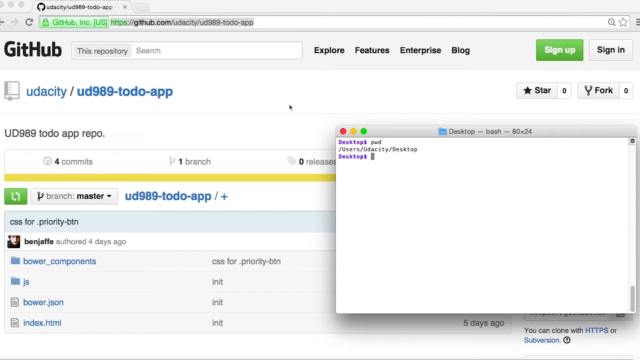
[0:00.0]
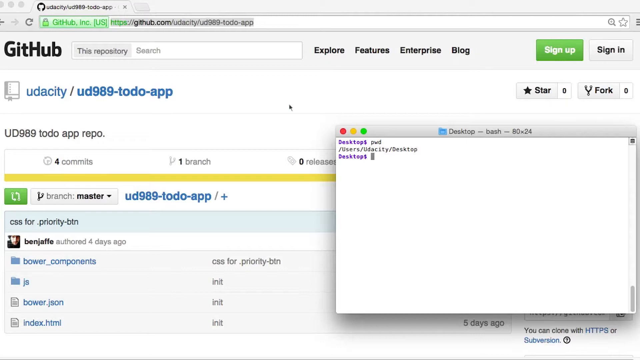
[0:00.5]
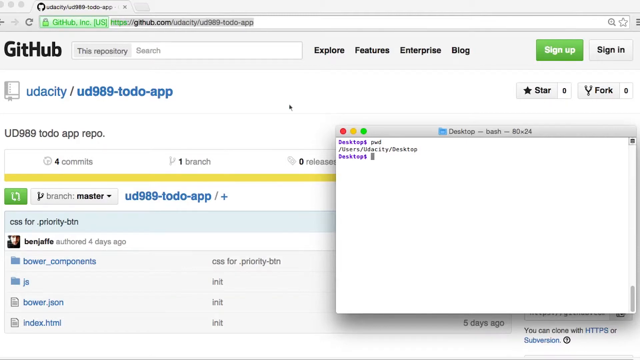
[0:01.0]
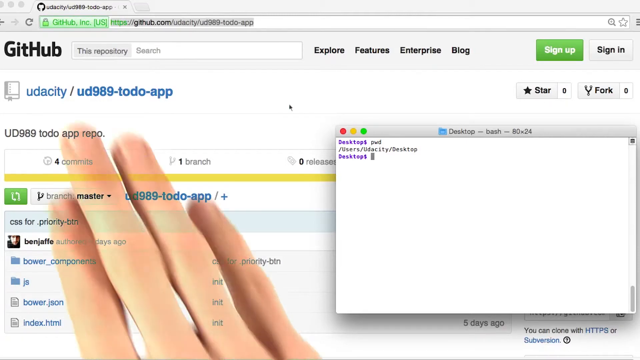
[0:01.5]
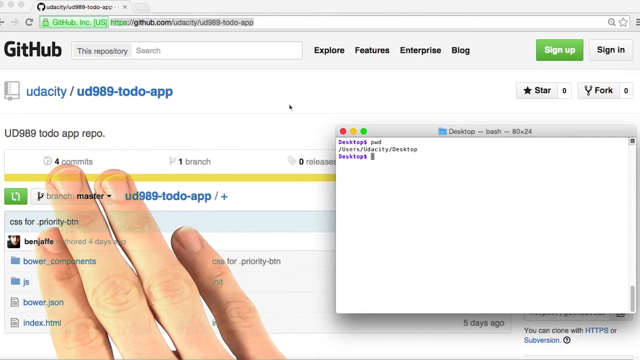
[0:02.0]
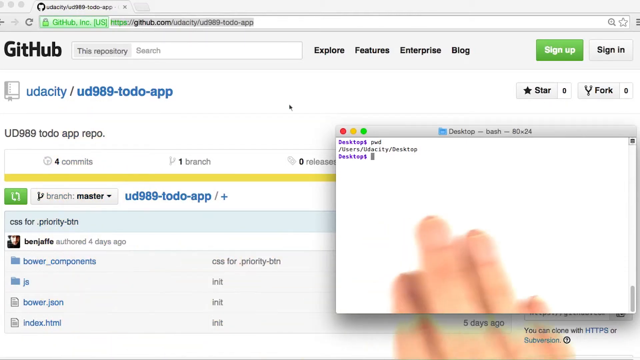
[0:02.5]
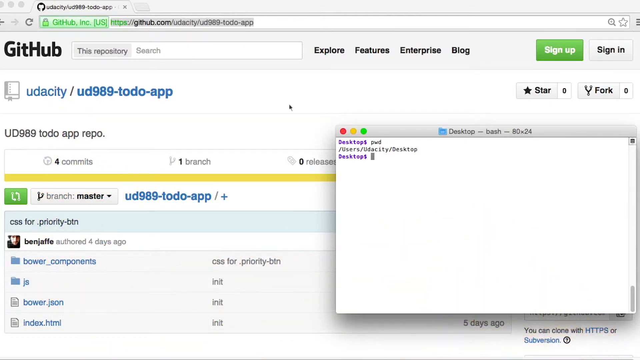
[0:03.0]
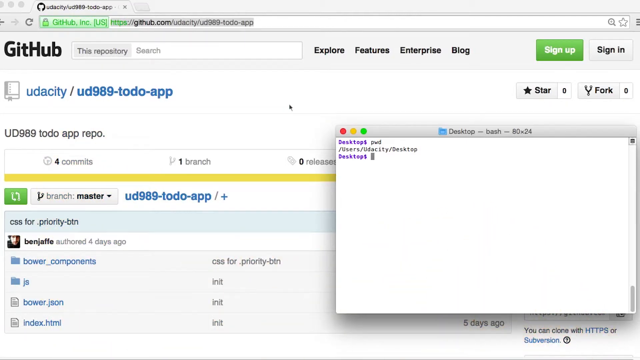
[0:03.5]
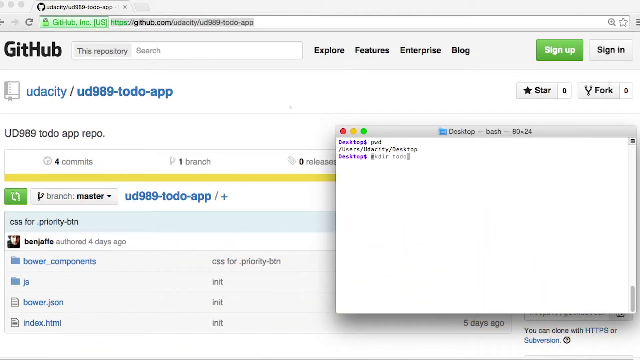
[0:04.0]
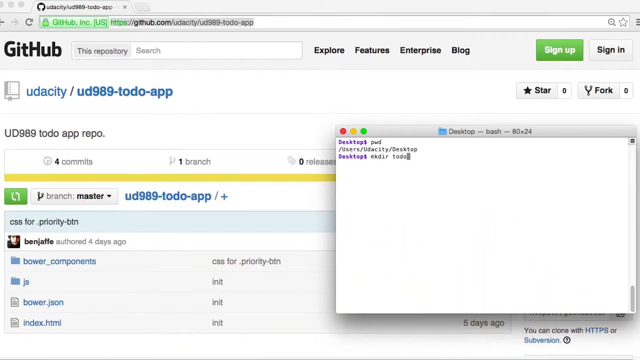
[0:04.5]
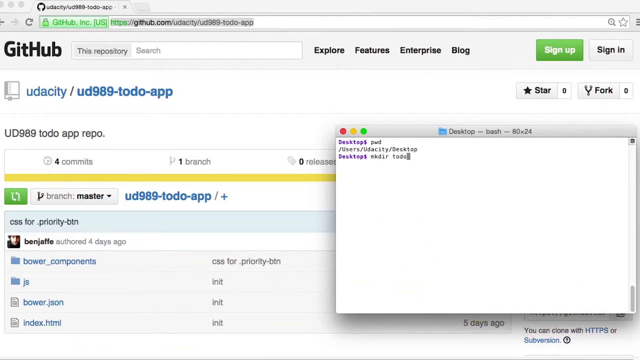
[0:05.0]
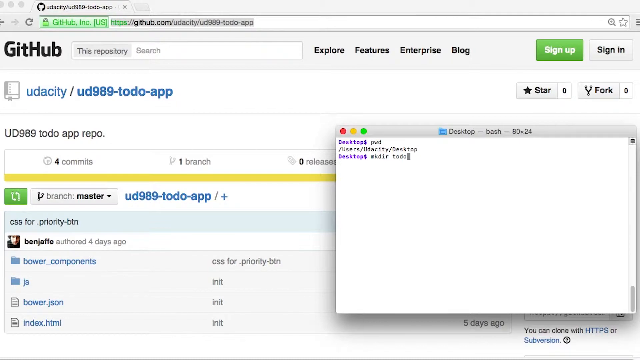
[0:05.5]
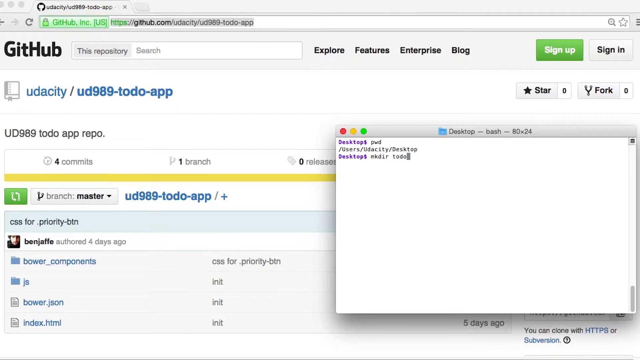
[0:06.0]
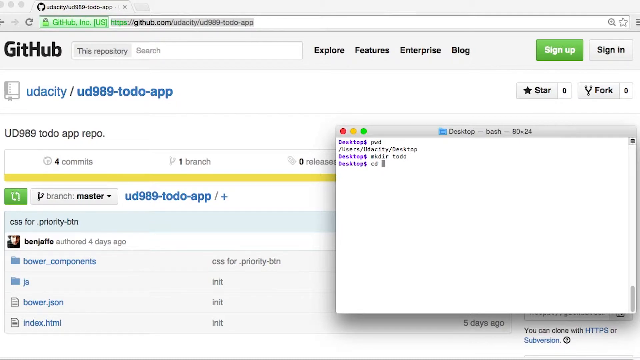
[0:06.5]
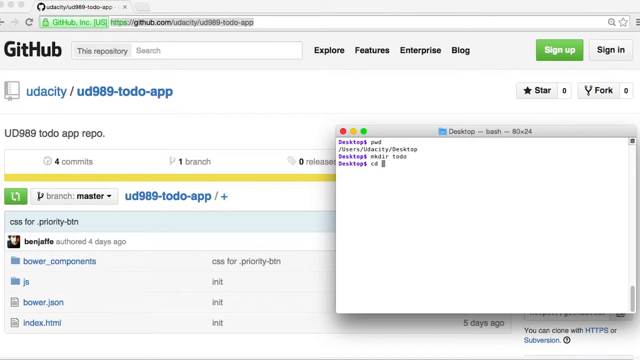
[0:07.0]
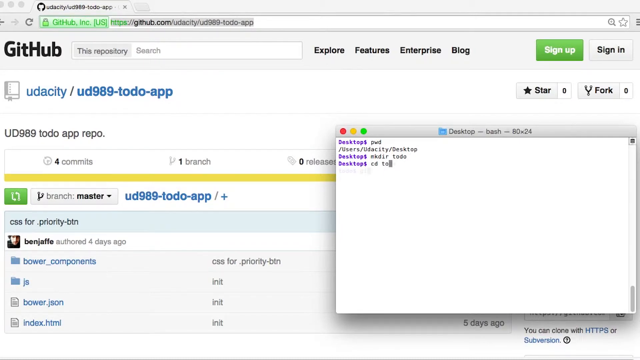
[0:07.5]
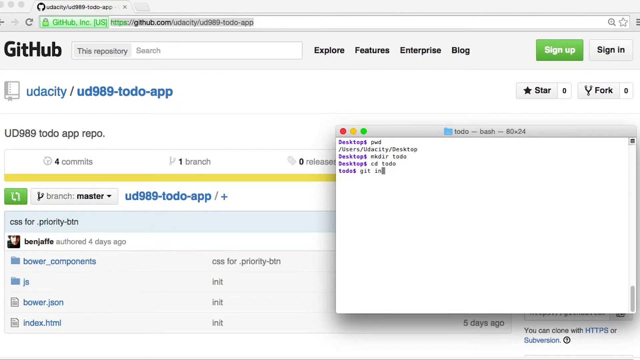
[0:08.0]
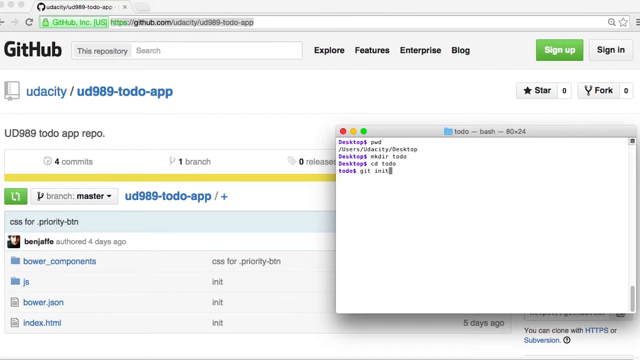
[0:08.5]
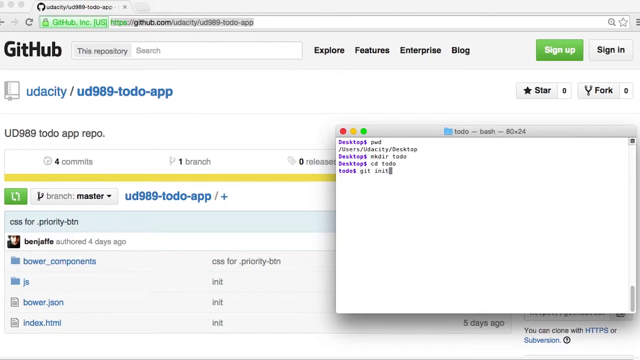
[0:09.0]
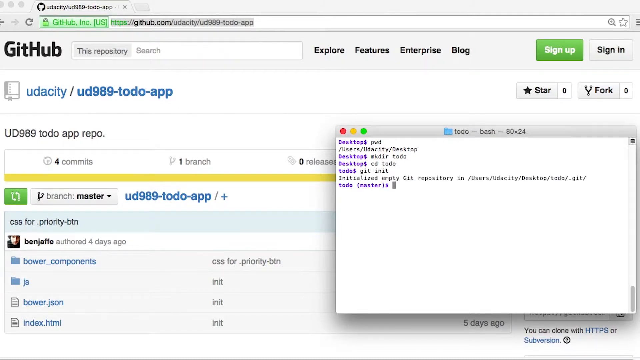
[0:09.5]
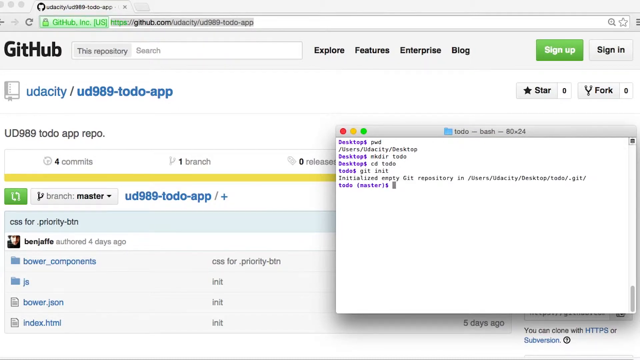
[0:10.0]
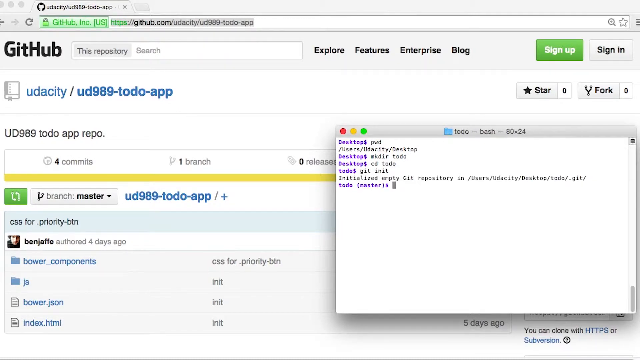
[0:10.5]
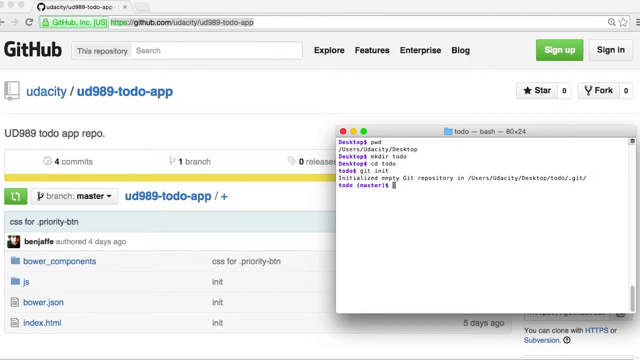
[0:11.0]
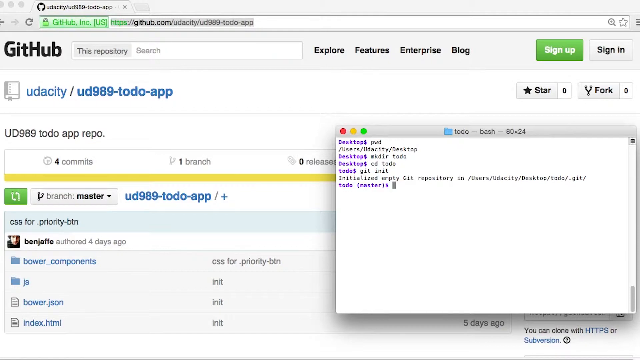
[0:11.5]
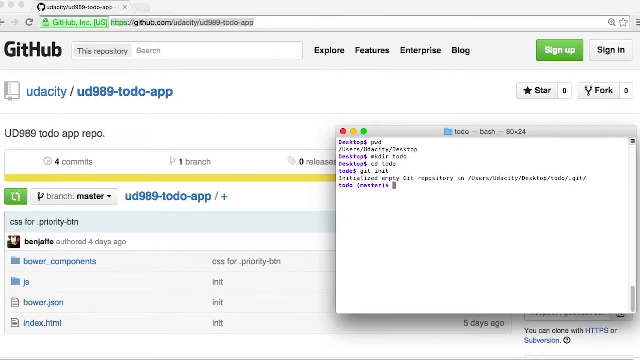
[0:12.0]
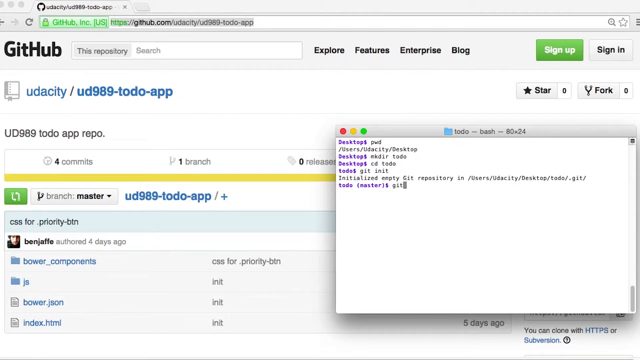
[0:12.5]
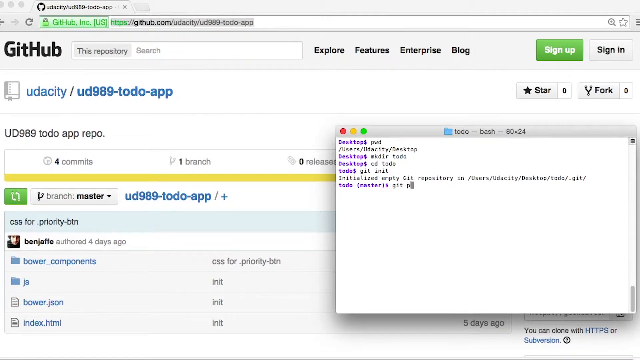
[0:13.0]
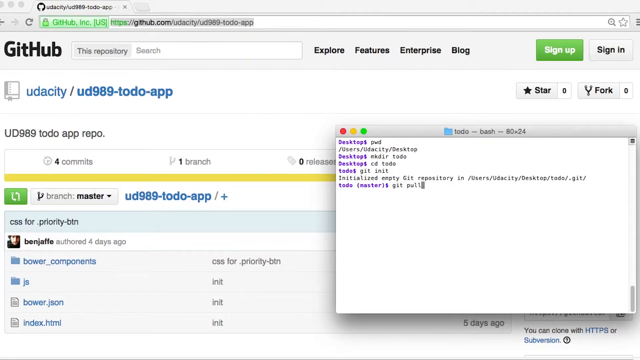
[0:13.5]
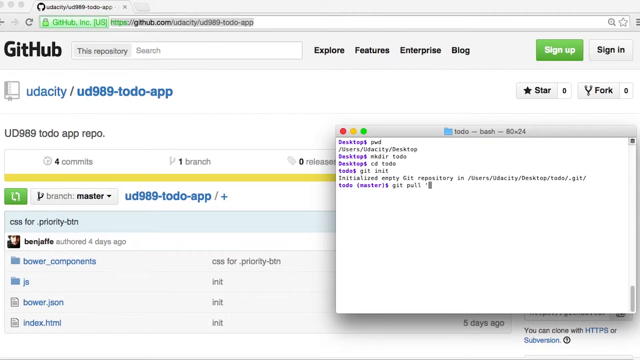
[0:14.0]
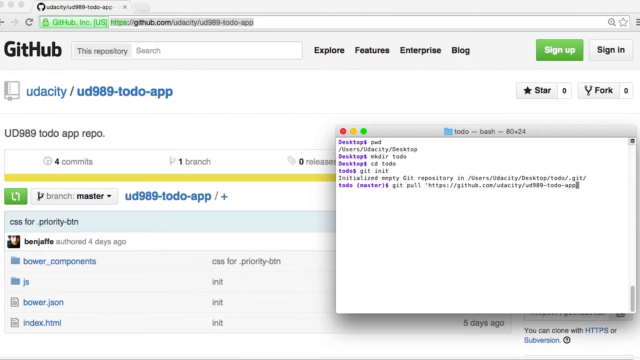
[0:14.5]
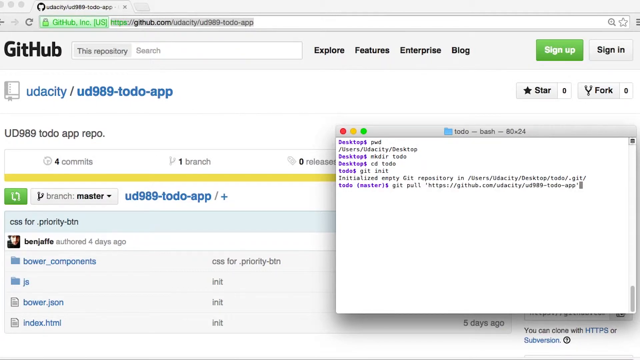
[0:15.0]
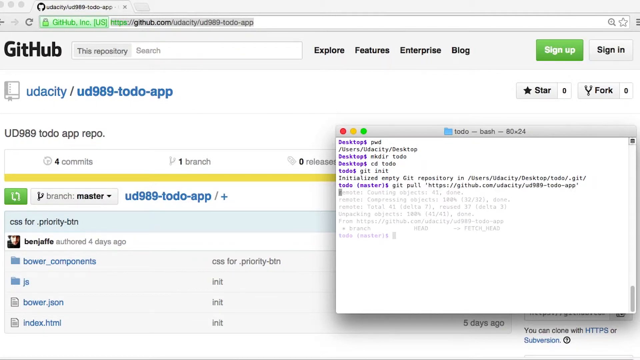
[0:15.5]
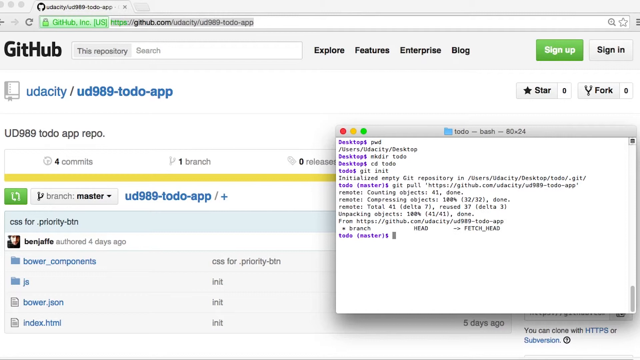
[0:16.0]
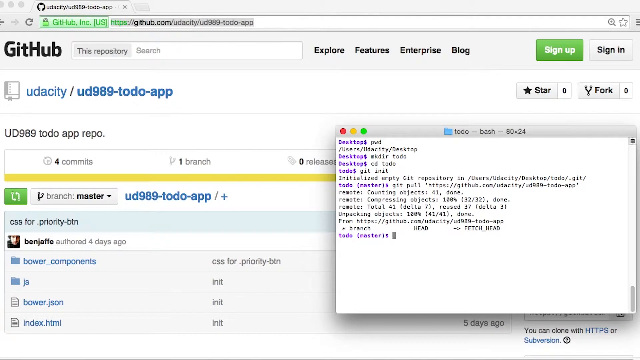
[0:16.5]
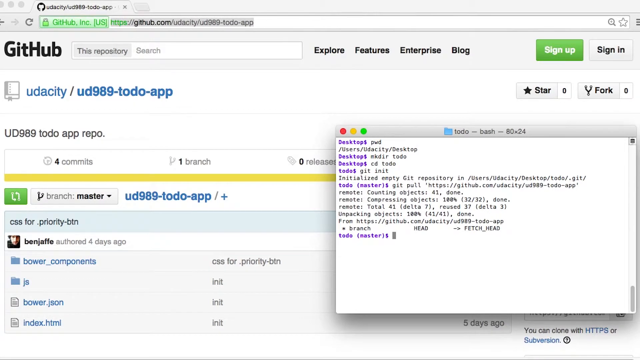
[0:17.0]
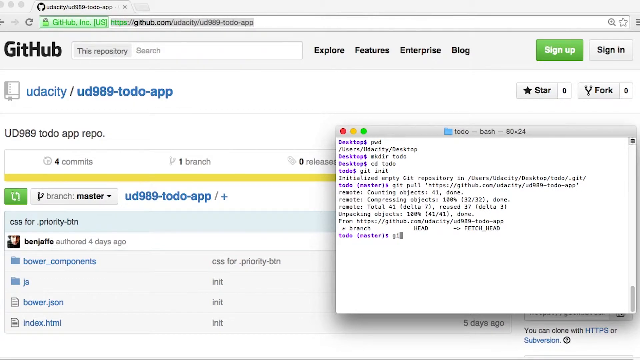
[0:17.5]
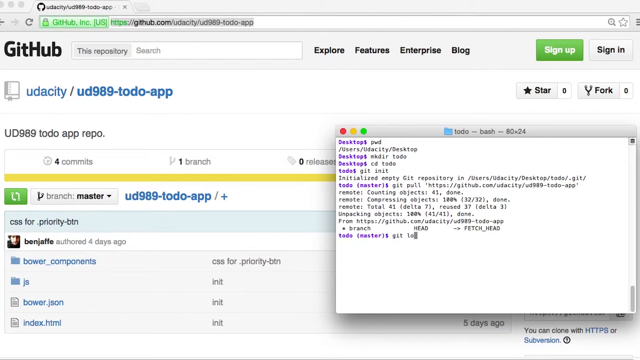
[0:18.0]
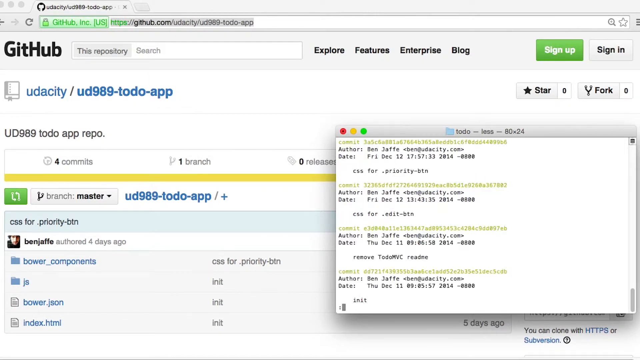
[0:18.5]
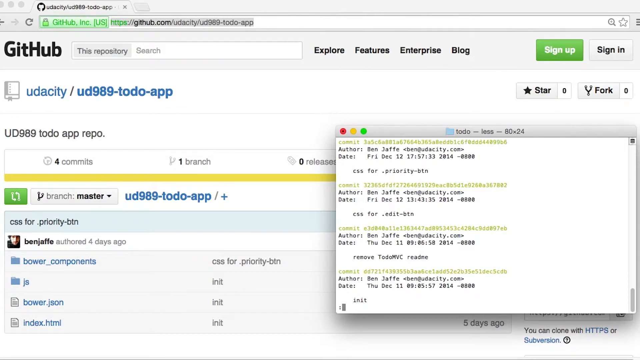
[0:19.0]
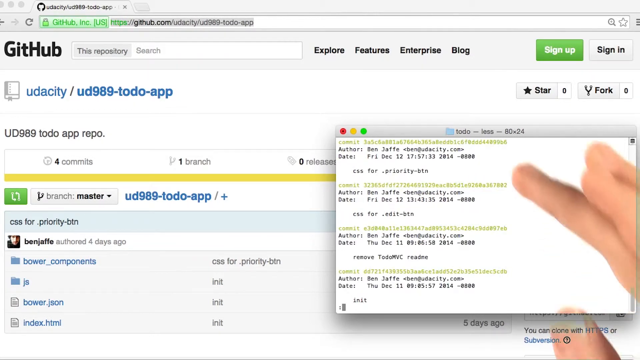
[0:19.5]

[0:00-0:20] The GitHub website is open, along with a folder on the right side of the screen that has code written in it. A Caucasian hand appears and points at the GitHub website, then at the folder. Code then begins to be written into the folder. The GitHub repository seems to be for an app called UD989-ToDo-App. In the middle of the website is a small avatar with a picture of a man, and below it are different folders for the app. Once the code is finished being written, it changes into another code, and a hand appears again from the right side of the screen and points at it. The code, originally purple and black writing, changes to lime-ish green writing with some black code still present. The computer being used seems to be an Apple computer.